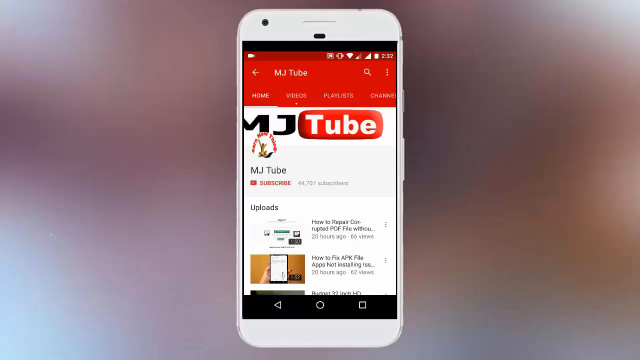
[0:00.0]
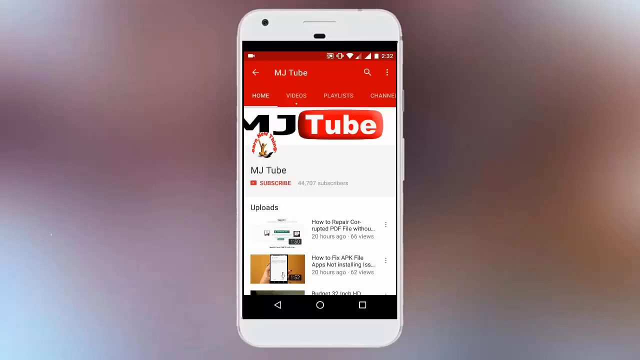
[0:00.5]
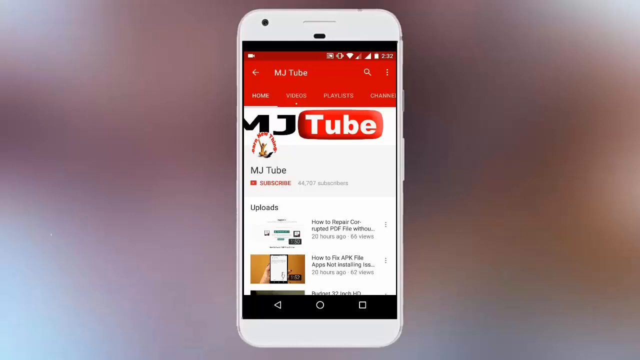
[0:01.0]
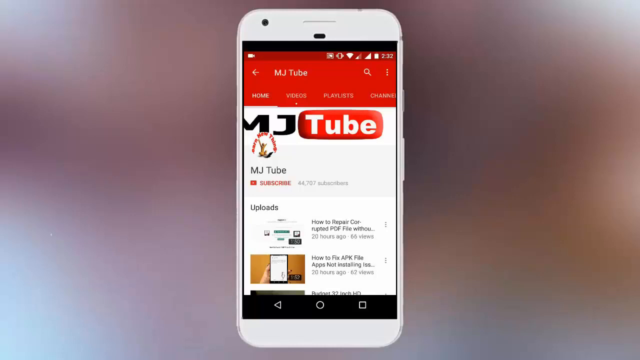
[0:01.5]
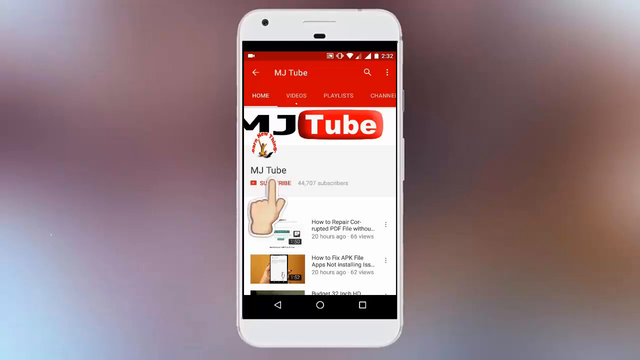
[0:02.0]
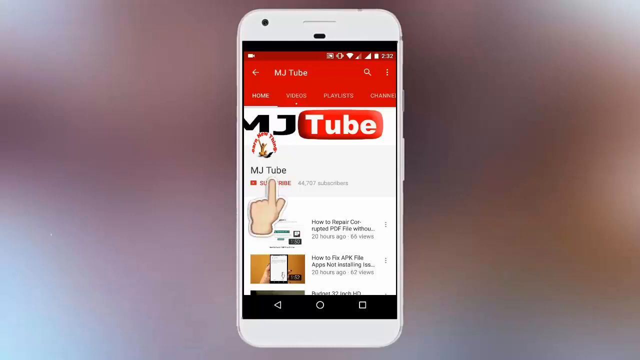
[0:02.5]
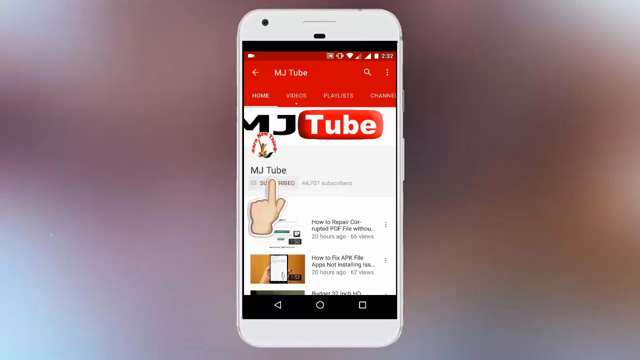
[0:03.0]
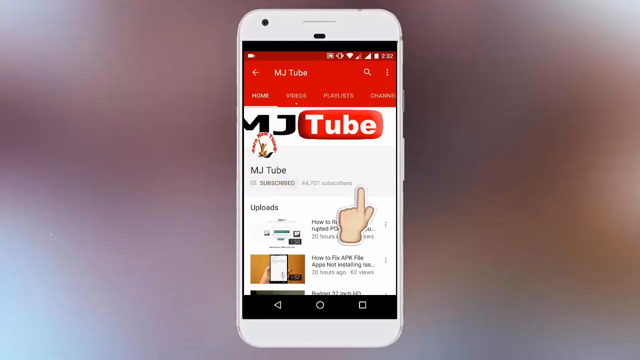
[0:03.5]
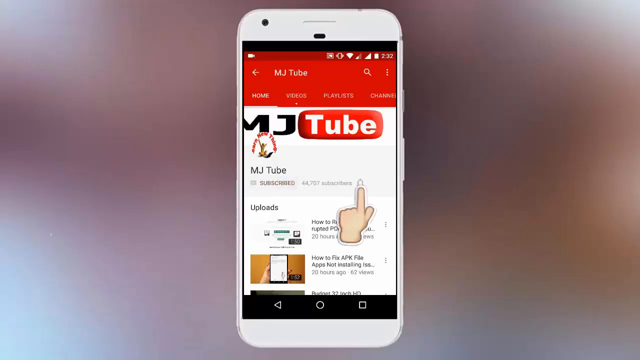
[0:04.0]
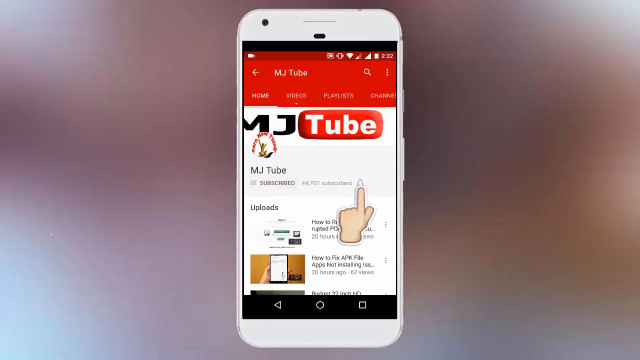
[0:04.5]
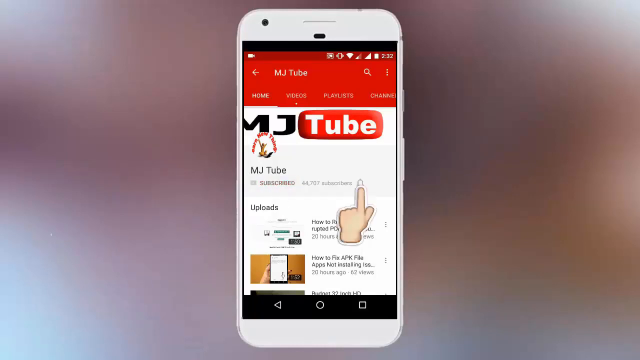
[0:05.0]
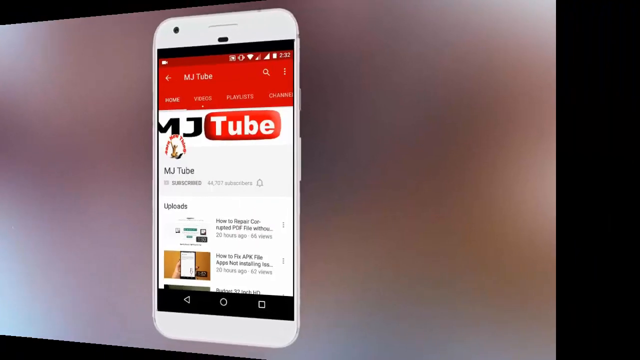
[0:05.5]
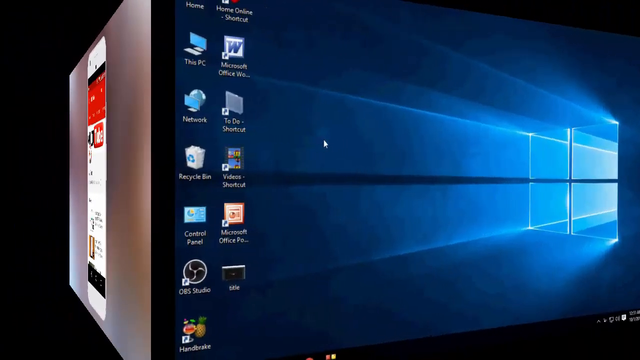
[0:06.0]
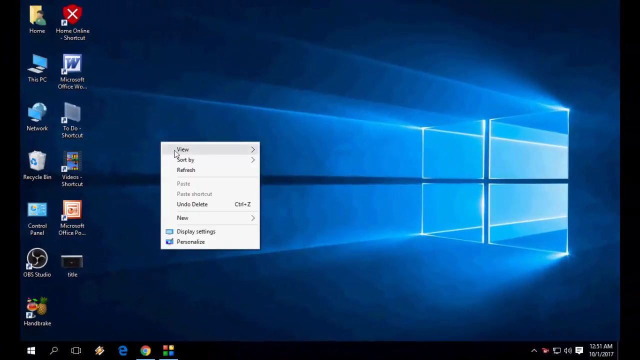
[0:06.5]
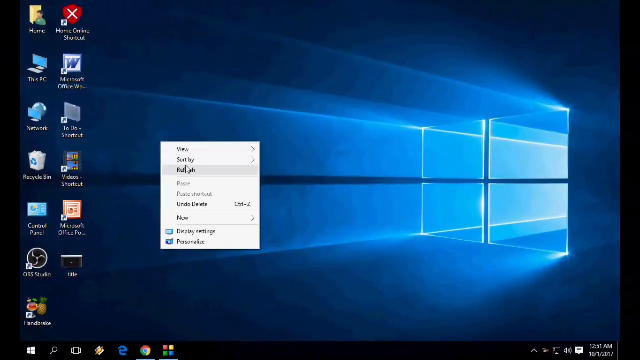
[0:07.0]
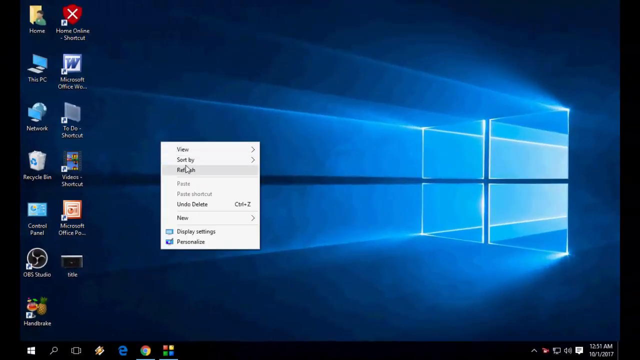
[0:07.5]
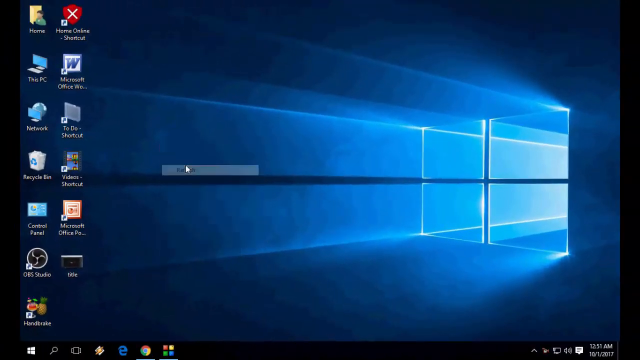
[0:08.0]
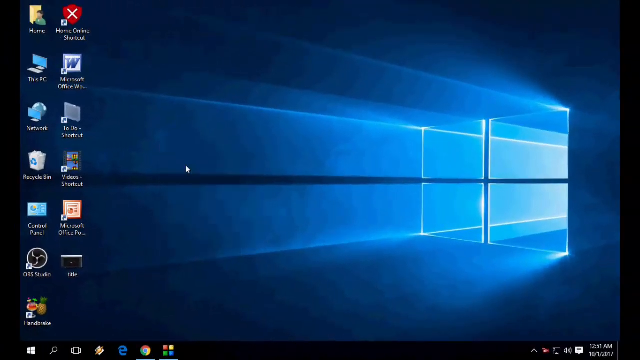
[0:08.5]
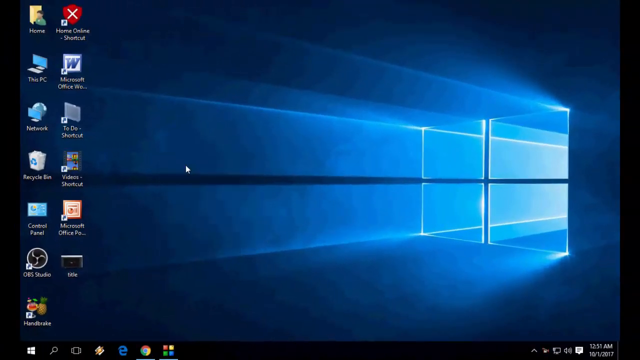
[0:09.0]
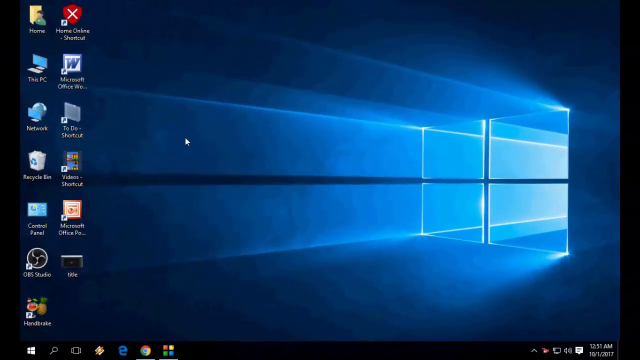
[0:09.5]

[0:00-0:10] The MJTube YouTube channel page is shown, with home, videos, playlists and channel tabs. The channel's uploaded content deals with PDF-related issues and fixing APK files for Android. An intro clip shows that viewers must subscribe and leave the notification bell on to get notified of new uploads.